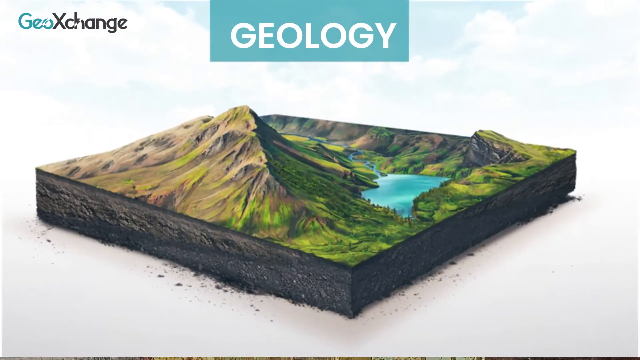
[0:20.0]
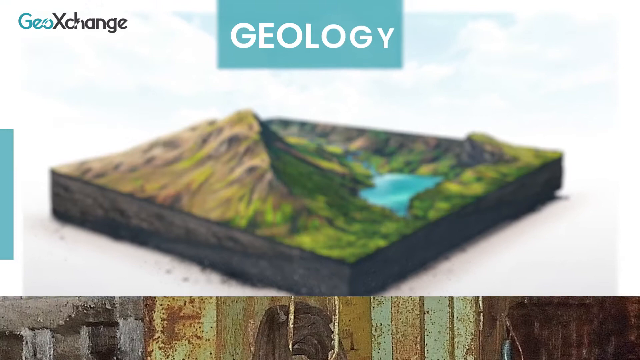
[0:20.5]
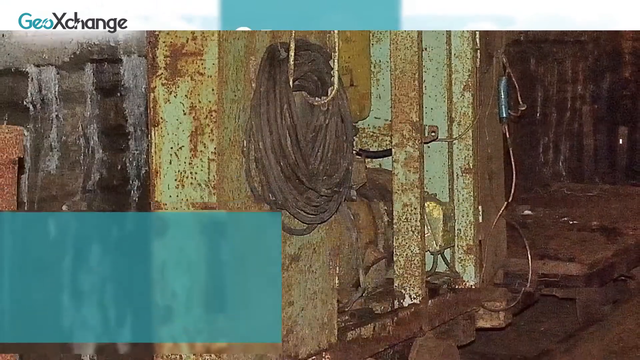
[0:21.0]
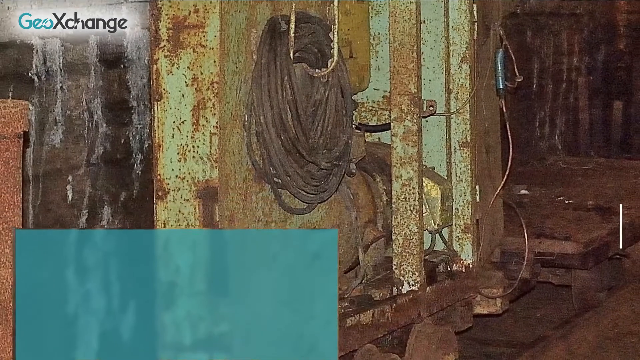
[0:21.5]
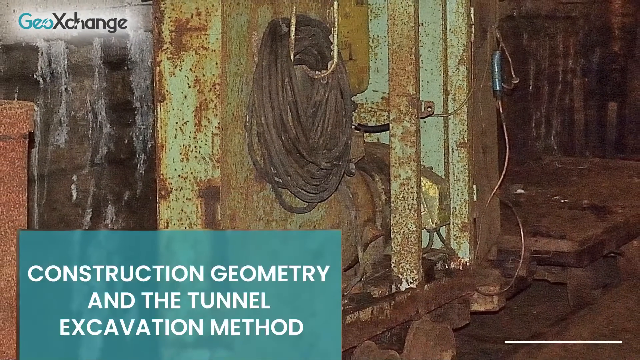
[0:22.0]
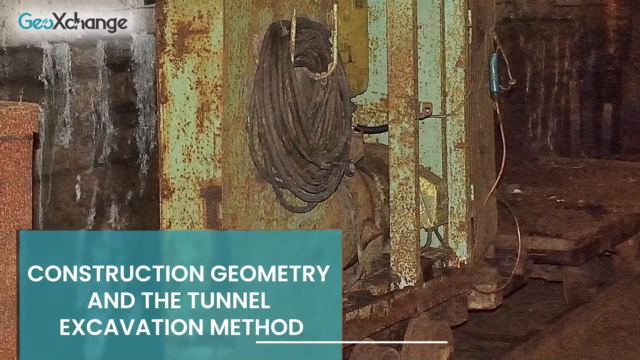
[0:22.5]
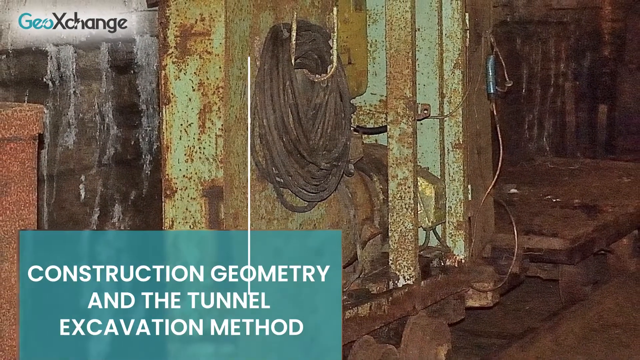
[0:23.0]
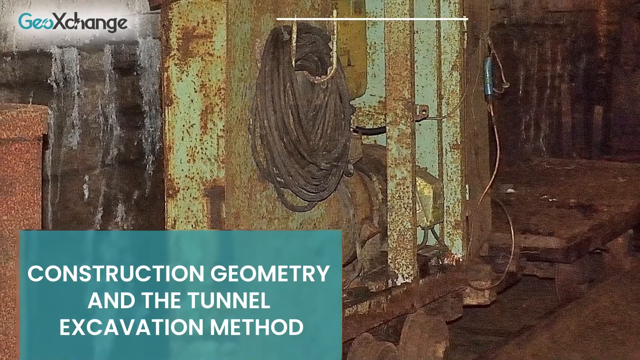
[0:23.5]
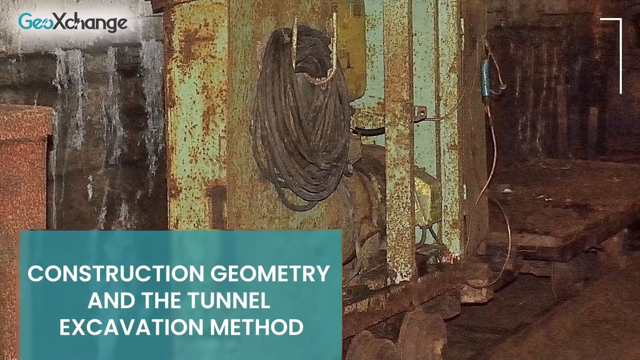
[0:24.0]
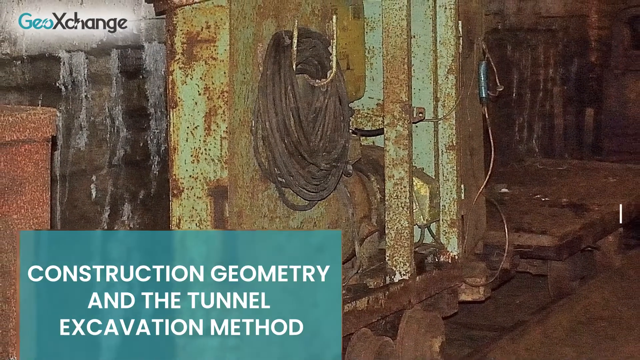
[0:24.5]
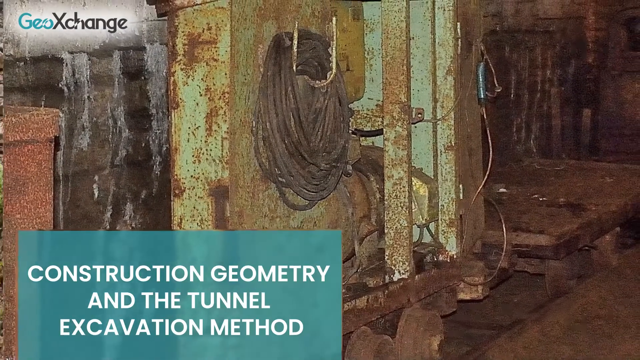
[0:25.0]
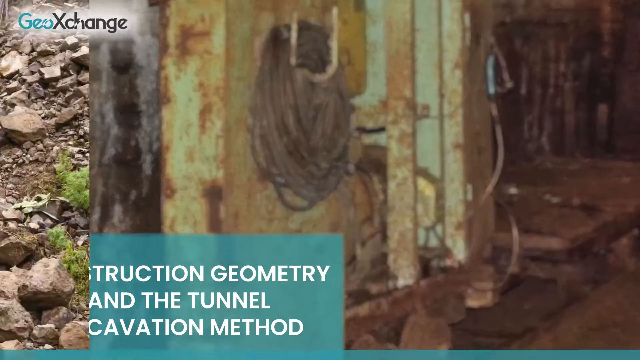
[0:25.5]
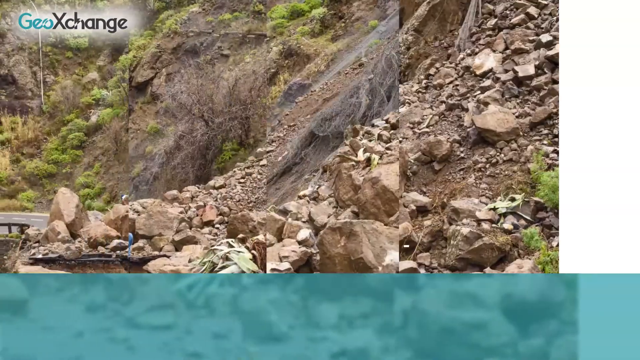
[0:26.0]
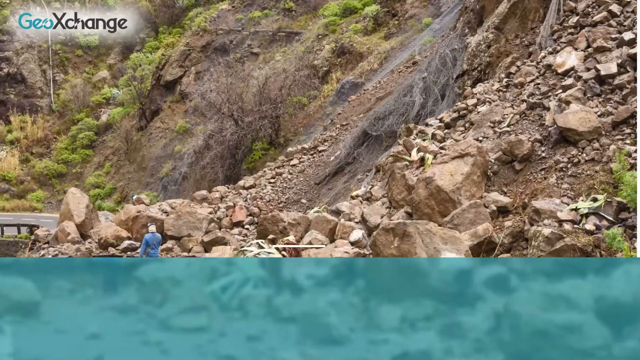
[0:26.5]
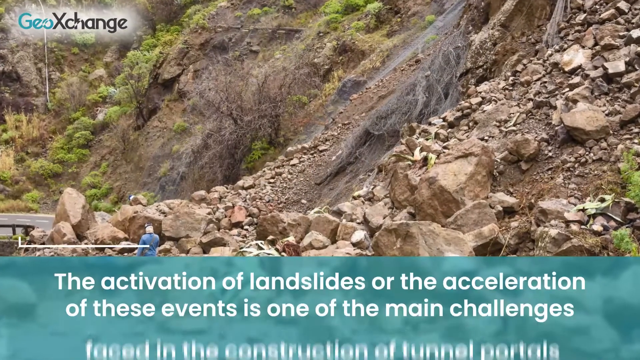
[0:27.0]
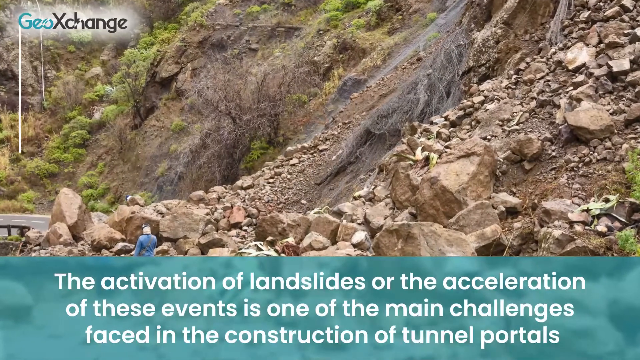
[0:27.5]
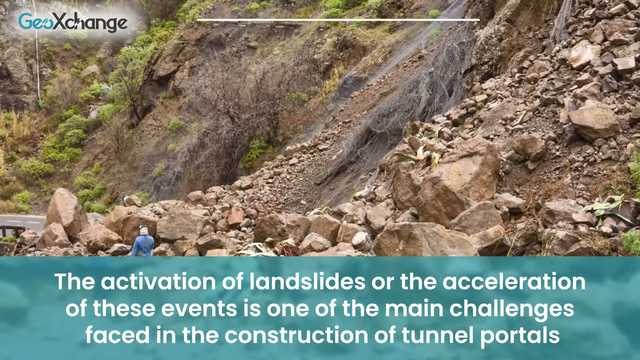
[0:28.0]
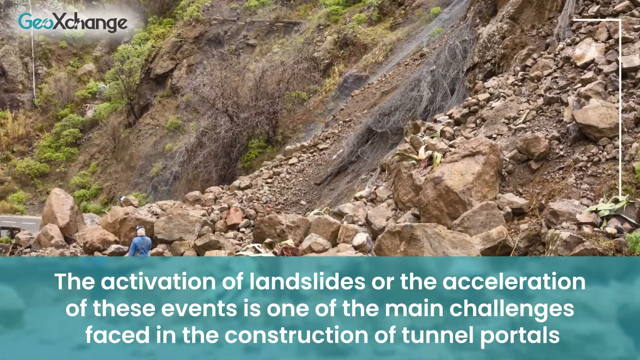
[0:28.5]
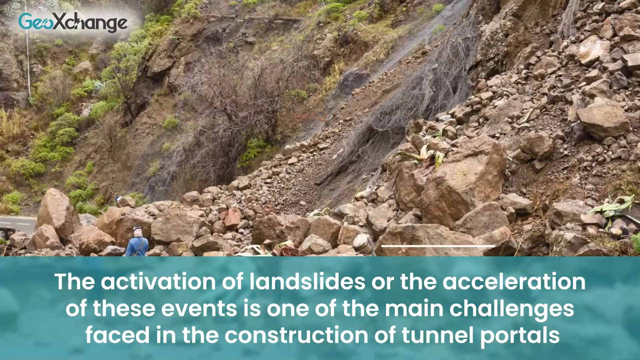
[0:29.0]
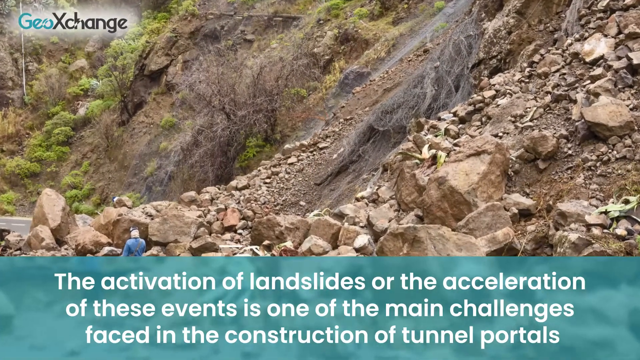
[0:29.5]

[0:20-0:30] The kind of square chunk of land remains on screen, showing the layers of rock underneath, the mountain on top, and the lake. Then the words "construction geometry and the tunnel excavation method" appear over an image of what looks to be excavation equipment. The video transitions to another slide reading "the activation of landslides or the acceleration of these events is one of the main challenges". In the background is an image of a mountain where there looks to have been a rock slide, with two people examining the rocks at the bottom of the rock slide.